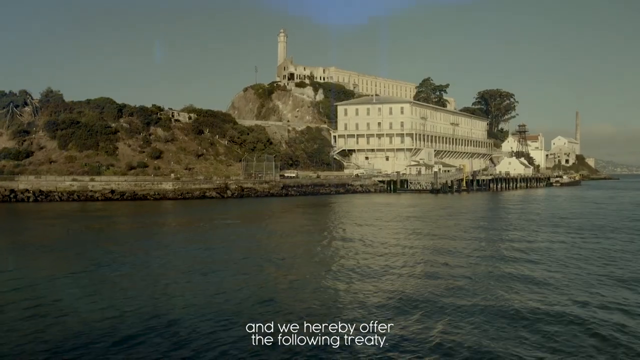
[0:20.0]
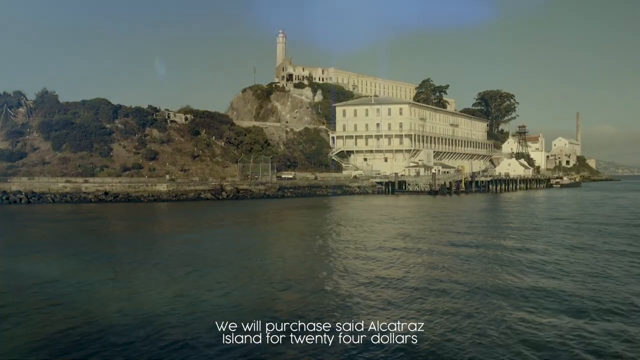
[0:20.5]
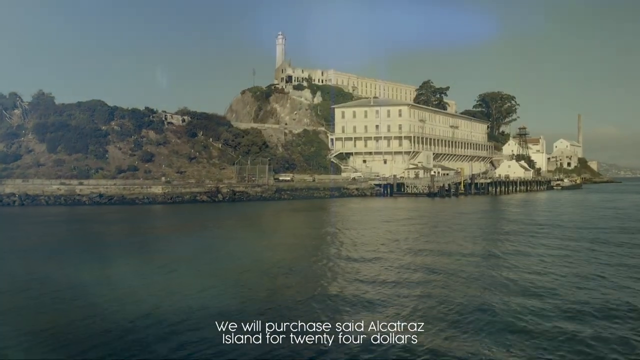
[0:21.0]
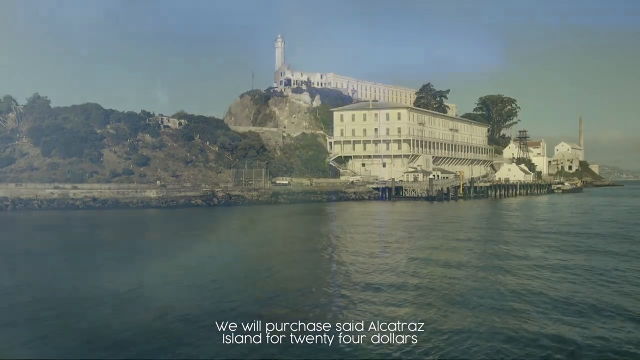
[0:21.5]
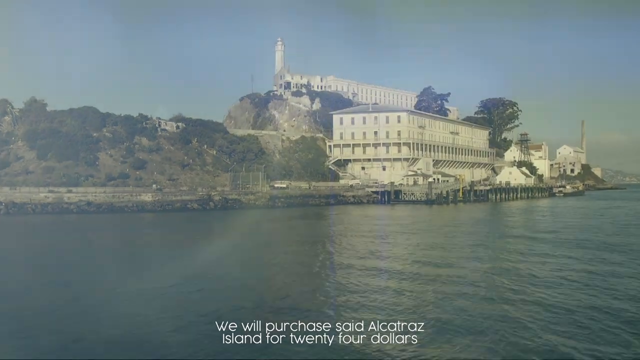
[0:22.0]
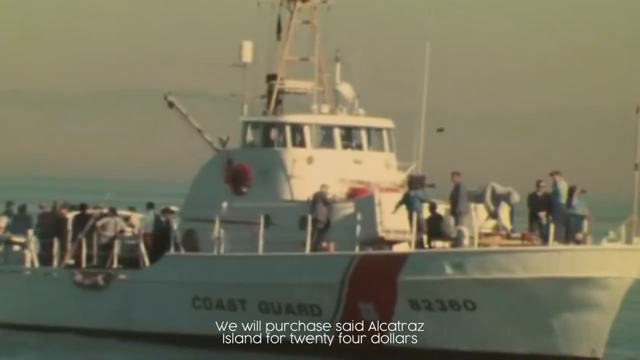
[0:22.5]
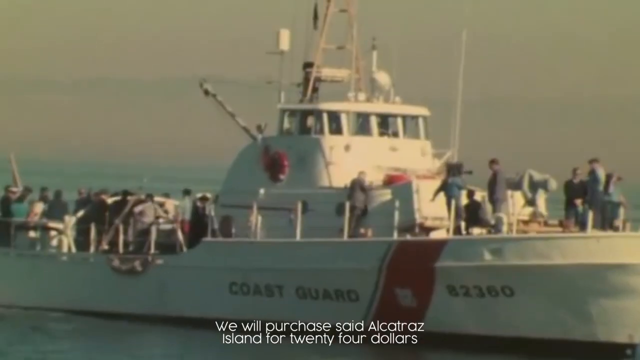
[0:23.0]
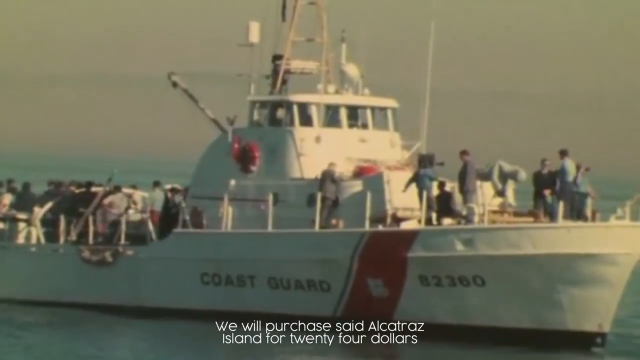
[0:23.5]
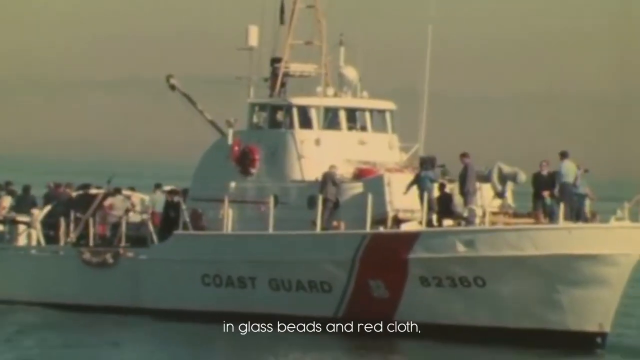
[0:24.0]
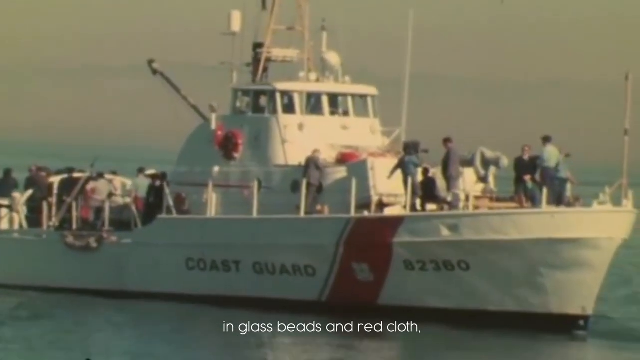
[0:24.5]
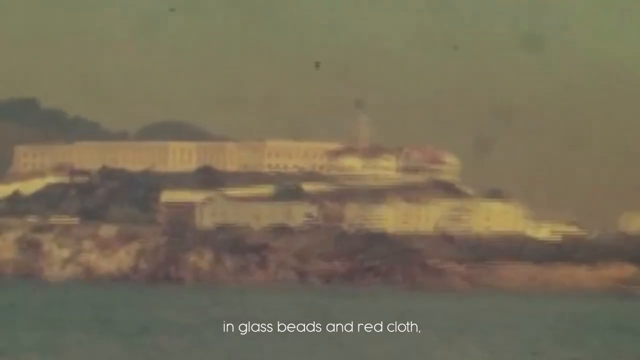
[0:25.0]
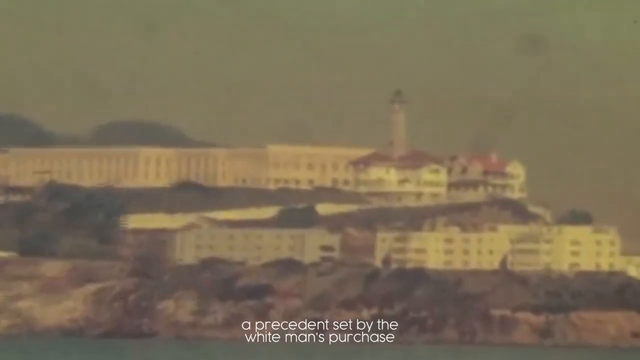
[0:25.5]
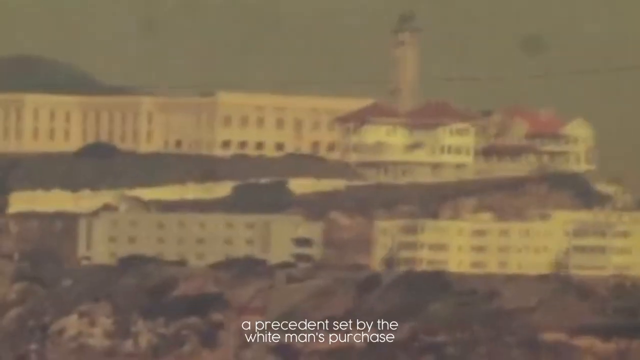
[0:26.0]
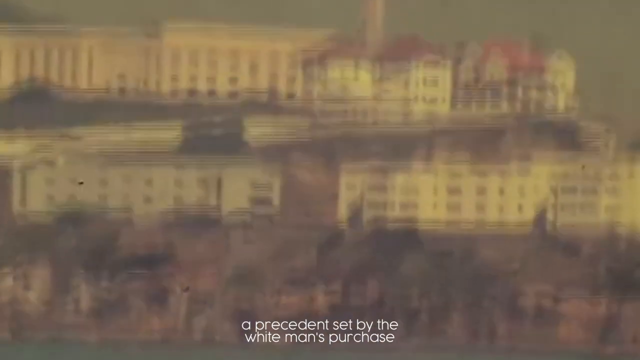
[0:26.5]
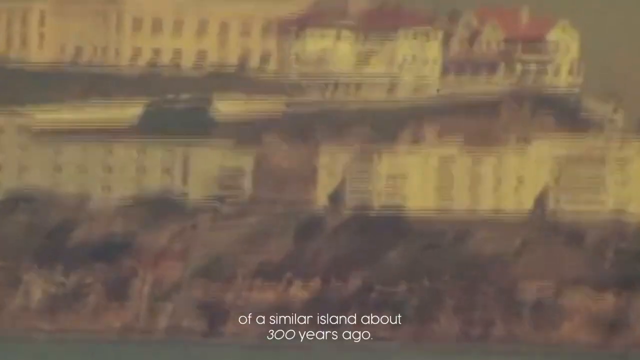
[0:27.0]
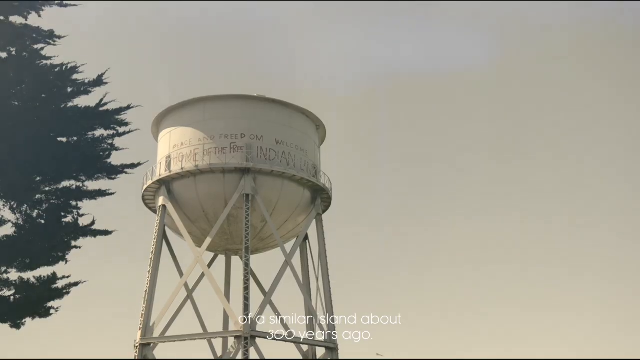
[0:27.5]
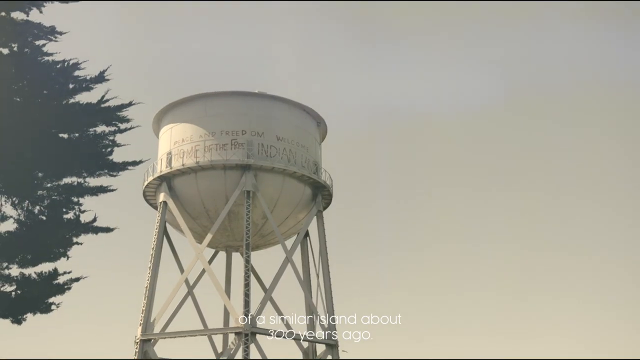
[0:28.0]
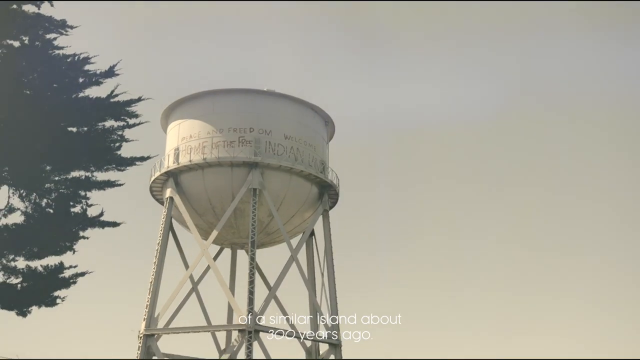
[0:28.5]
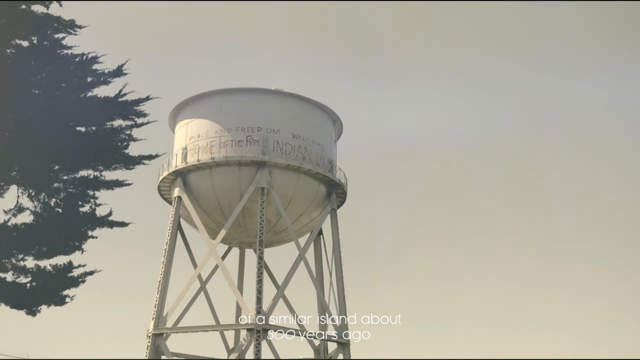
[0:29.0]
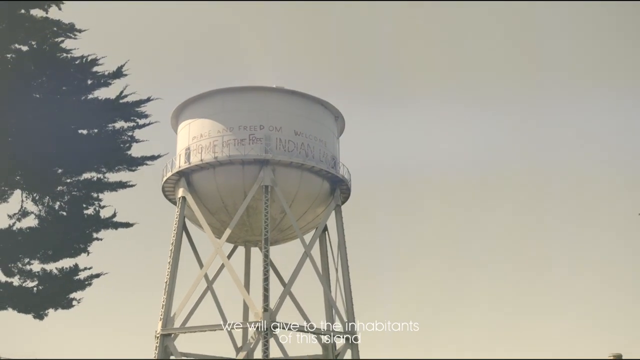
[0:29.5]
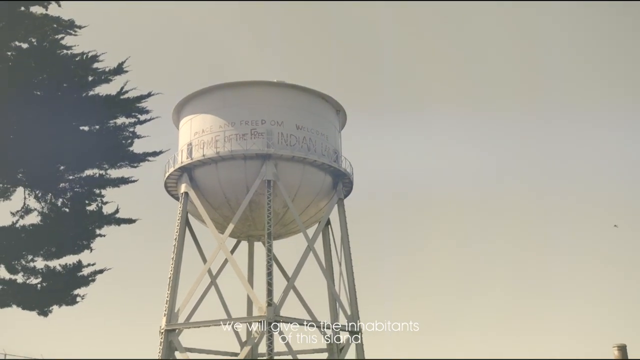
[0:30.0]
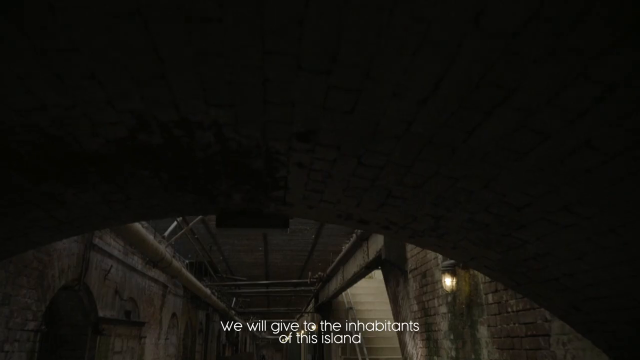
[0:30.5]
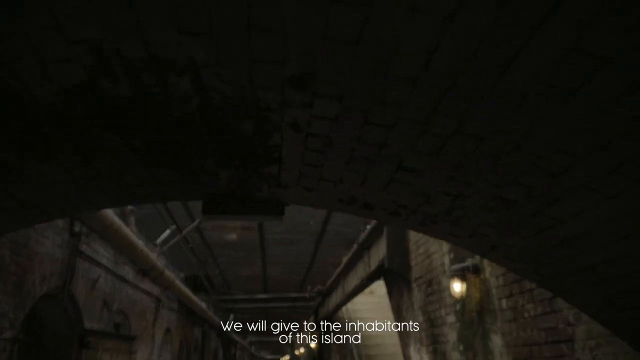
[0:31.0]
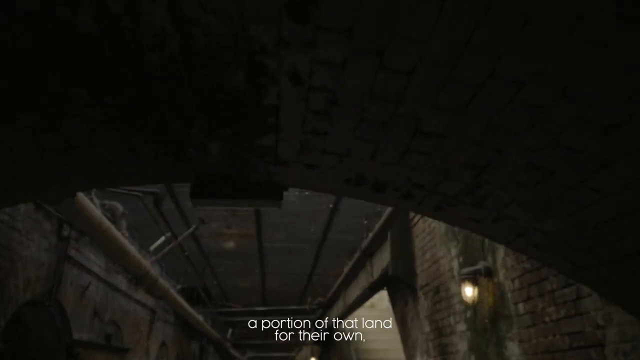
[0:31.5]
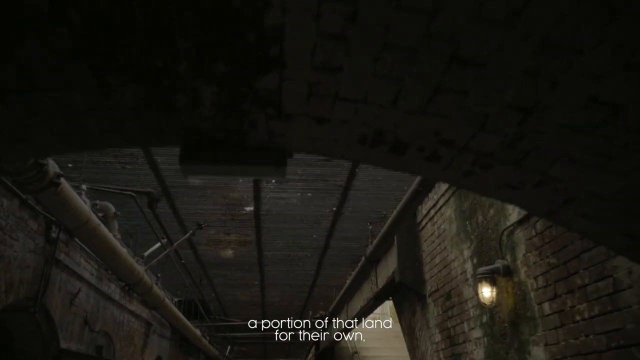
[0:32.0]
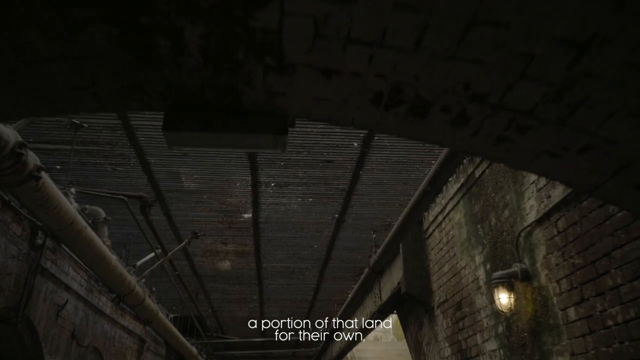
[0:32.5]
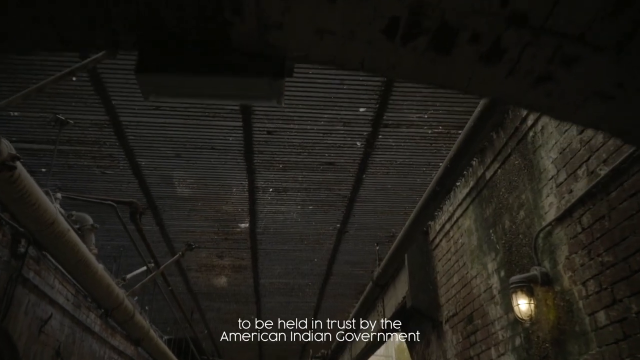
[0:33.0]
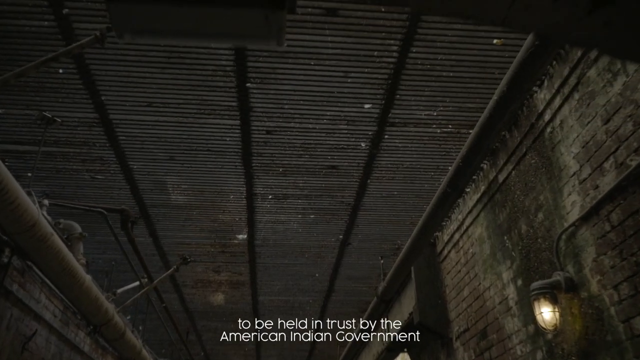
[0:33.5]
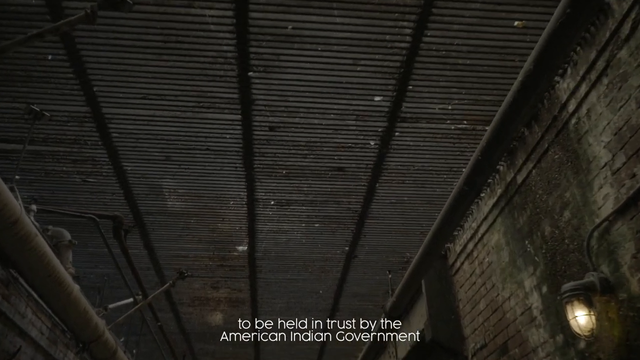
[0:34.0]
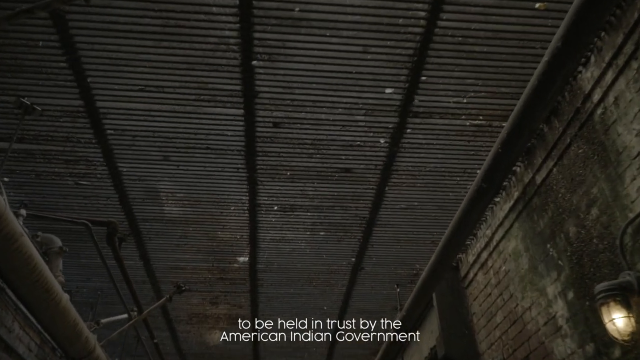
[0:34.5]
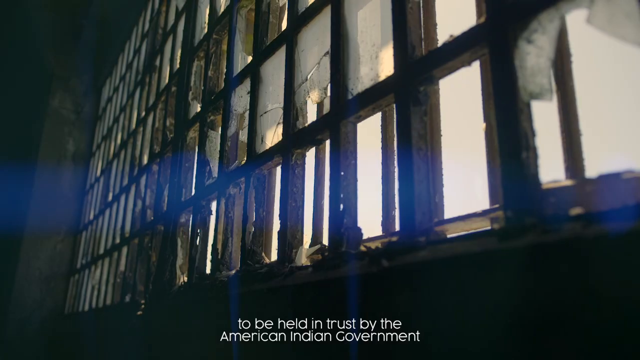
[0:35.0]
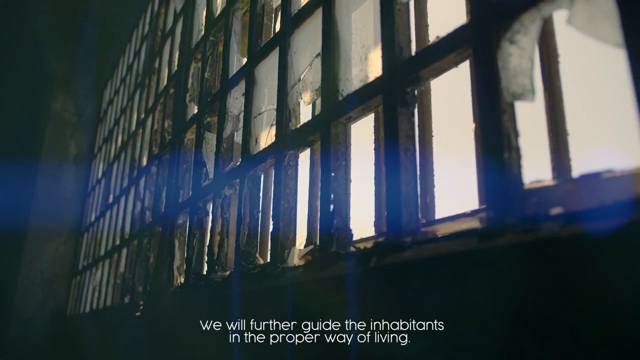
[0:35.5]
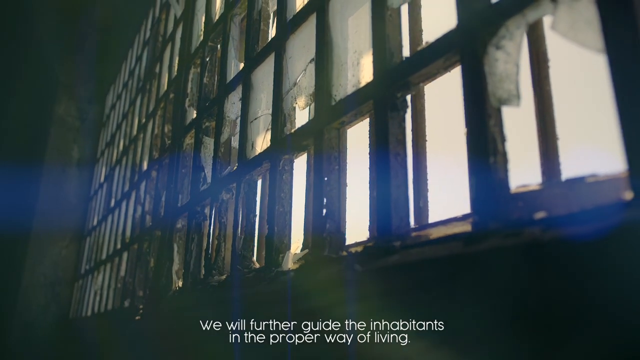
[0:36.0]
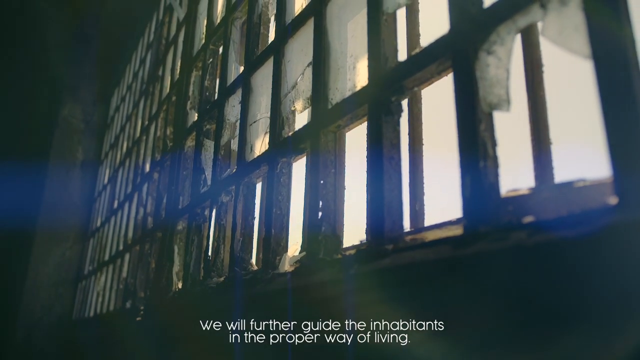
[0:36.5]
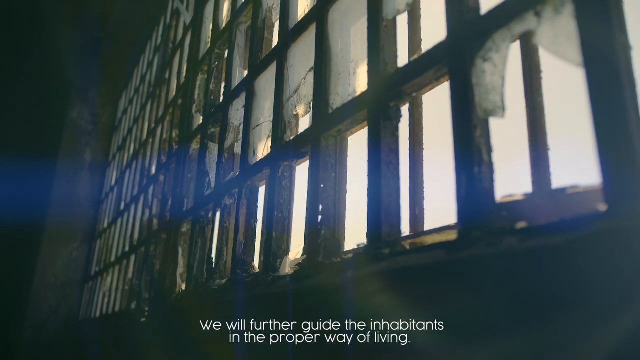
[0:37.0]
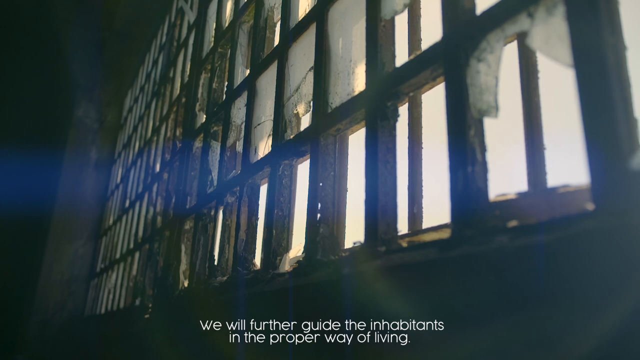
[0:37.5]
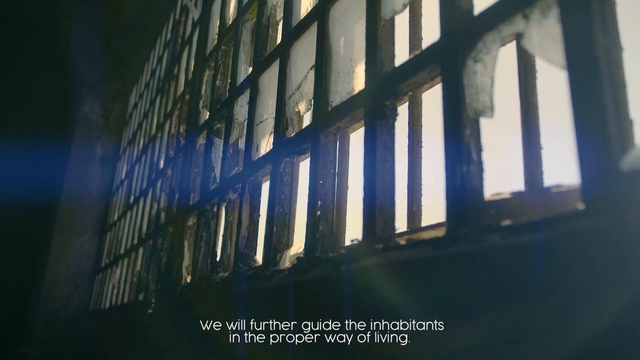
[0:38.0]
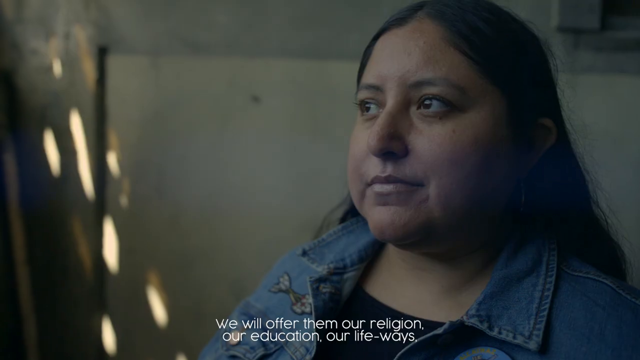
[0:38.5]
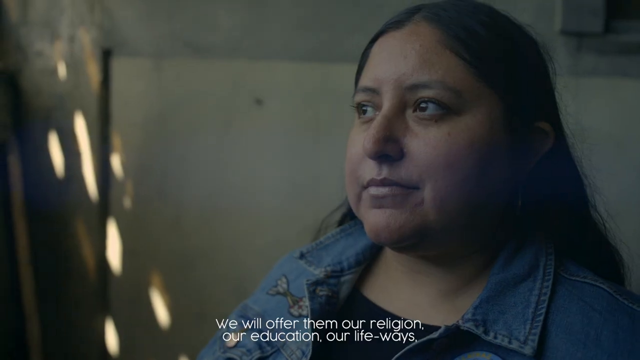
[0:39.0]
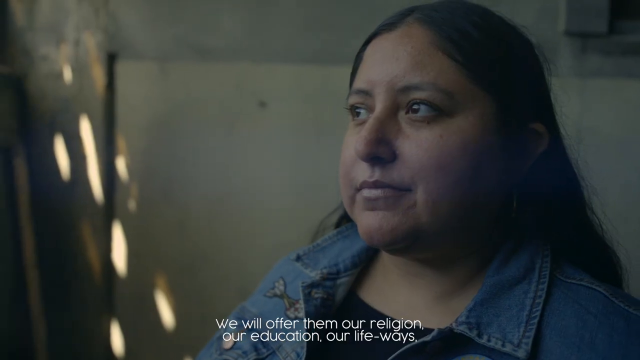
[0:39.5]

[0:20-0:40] The boat reaches land with buildings on it, mostly white, about six or so in total on the left-hand side of the frame. The land is mostly grassy, with darker green trees. White text appears at the bottom. The scene changes to a large white boat with the words "Coast Guard" written on it and the number "82360" on the bottom right of the boat, with a number of people riding on it. Next, the camera zooms in on the buildings on the island; the footage appears very old. A very white water tower follows, with a grayish sky behind it and a large dark-colored tree on the left. The scene then moves inside a building as the camera zooms in, with stone walls on the right and, above, what appears to be a metal grate or some similar structure. A close-up shows what appears to be window bars, possibly inside a prison. Then a close-up shows a woman looking to the left, with long black hair going down her back and a jean jacket.